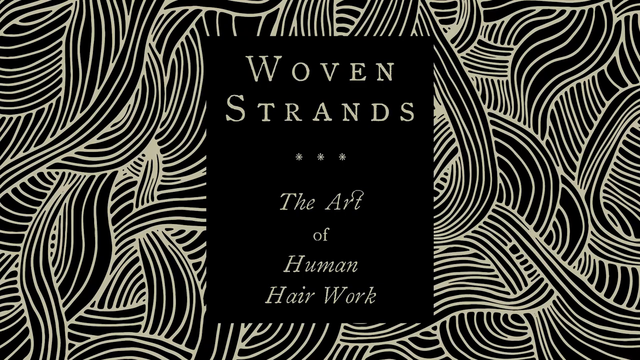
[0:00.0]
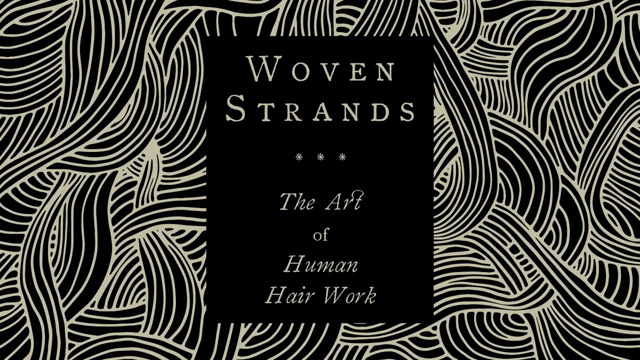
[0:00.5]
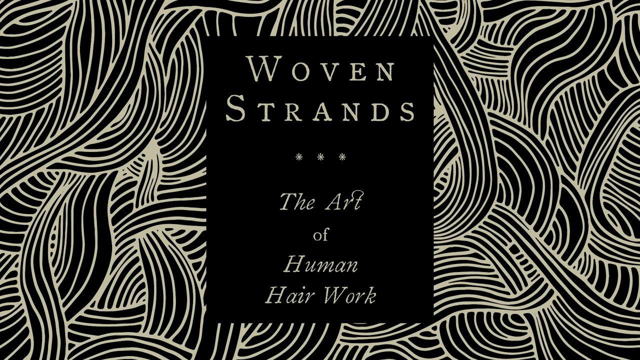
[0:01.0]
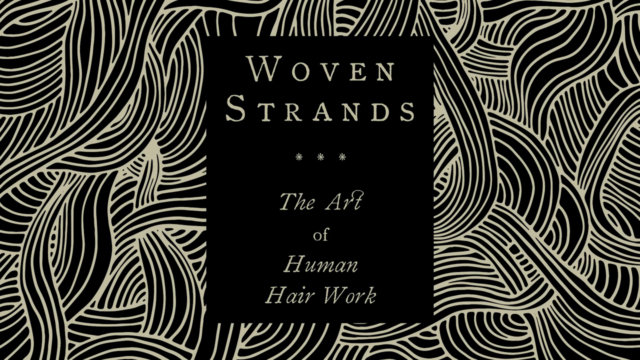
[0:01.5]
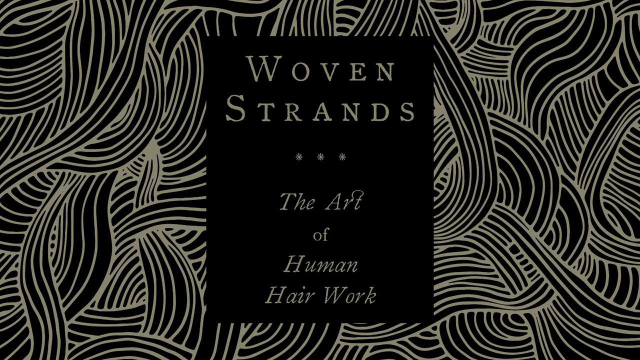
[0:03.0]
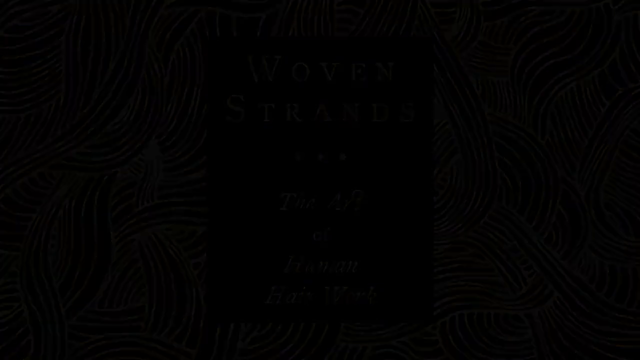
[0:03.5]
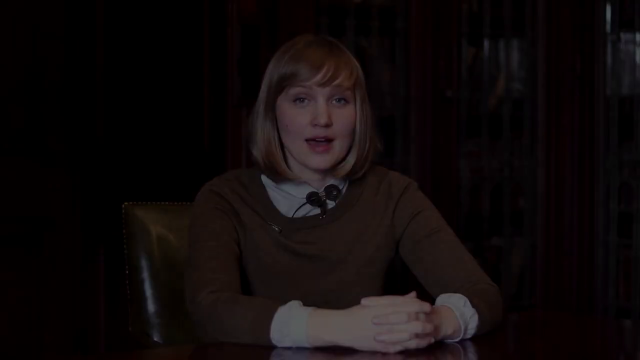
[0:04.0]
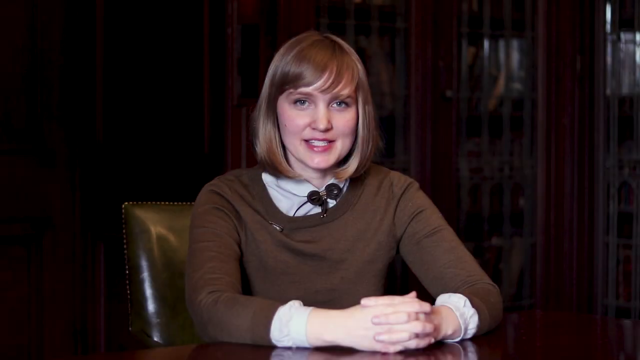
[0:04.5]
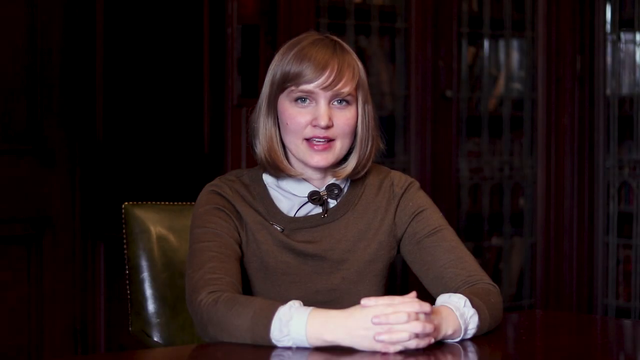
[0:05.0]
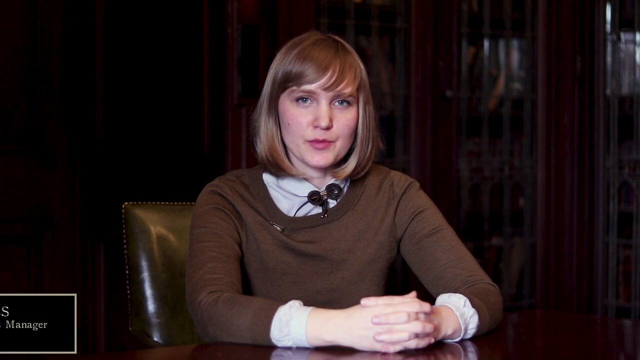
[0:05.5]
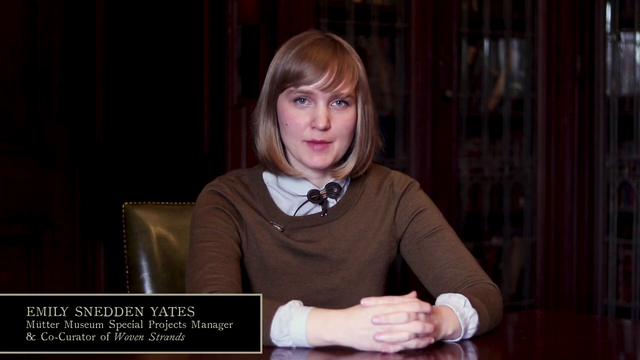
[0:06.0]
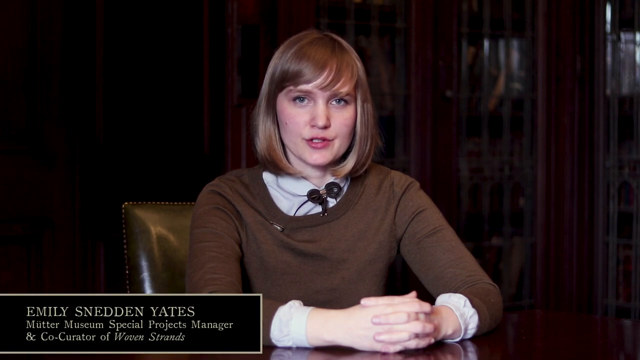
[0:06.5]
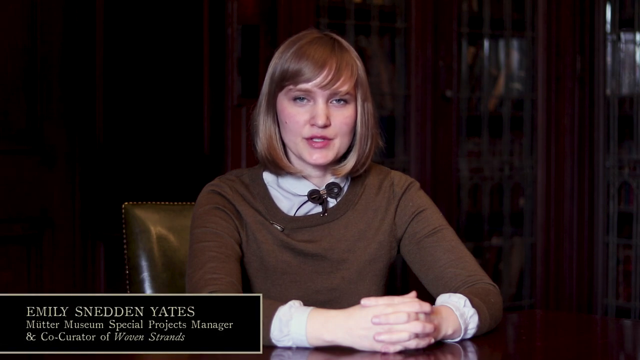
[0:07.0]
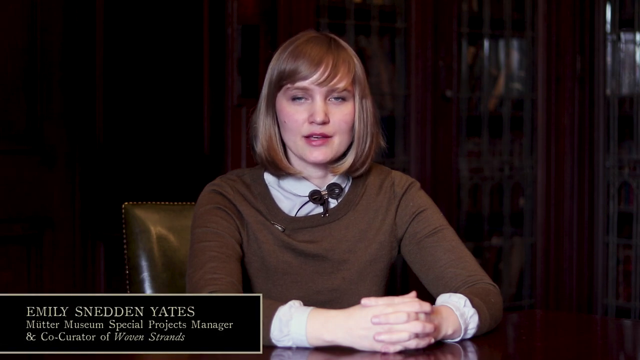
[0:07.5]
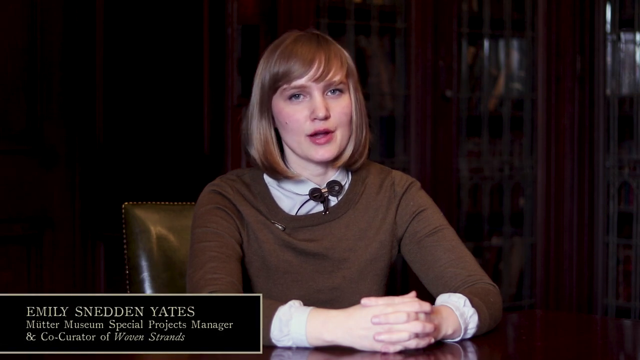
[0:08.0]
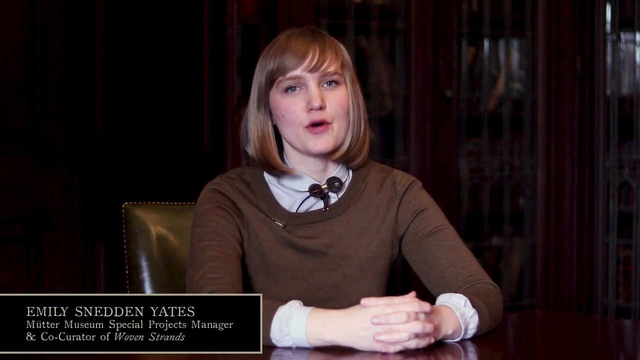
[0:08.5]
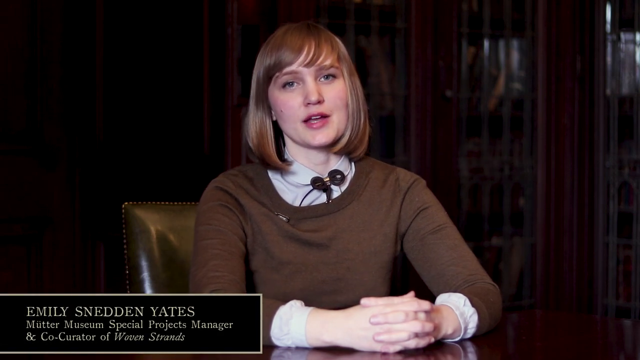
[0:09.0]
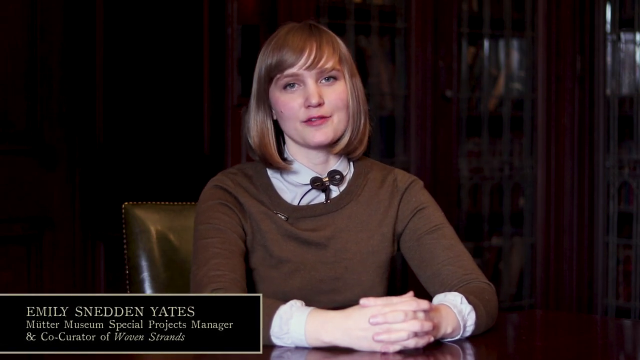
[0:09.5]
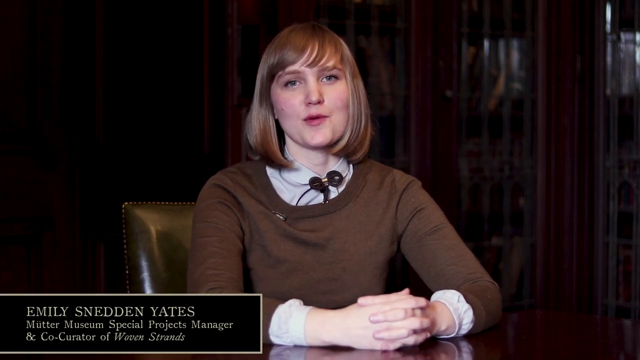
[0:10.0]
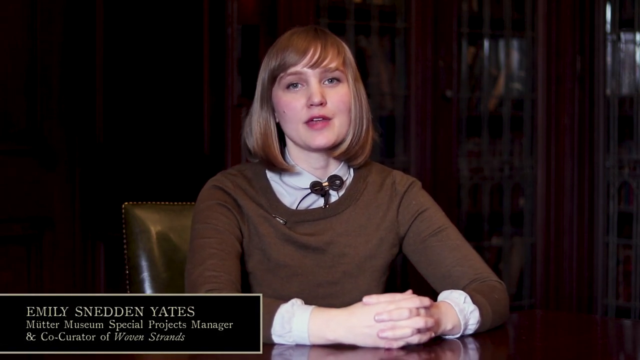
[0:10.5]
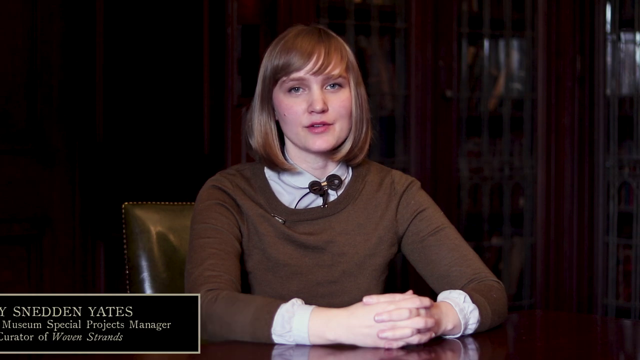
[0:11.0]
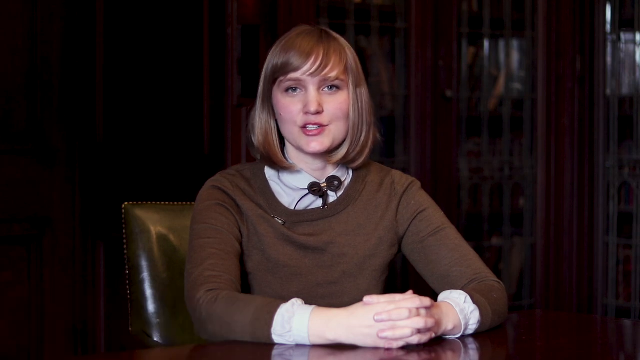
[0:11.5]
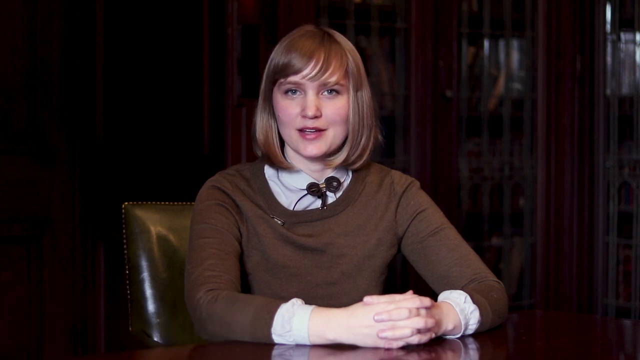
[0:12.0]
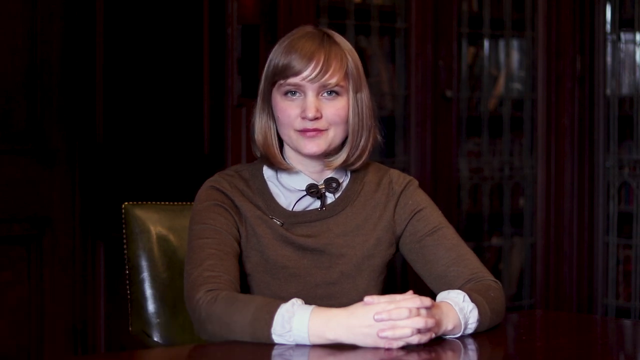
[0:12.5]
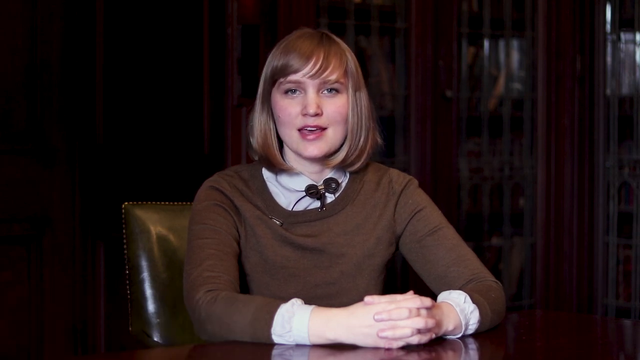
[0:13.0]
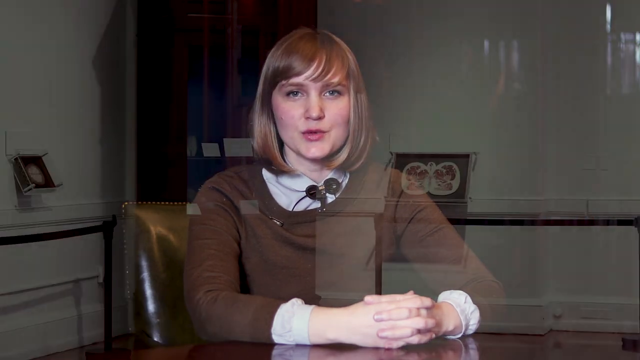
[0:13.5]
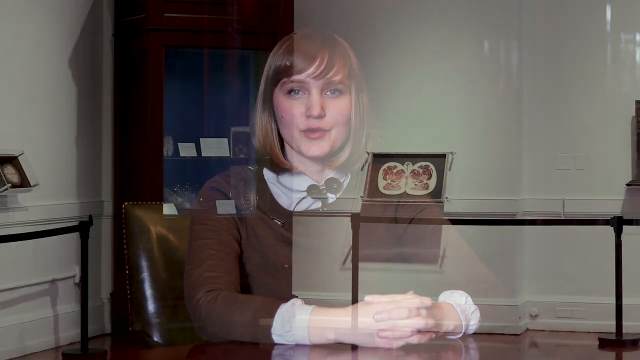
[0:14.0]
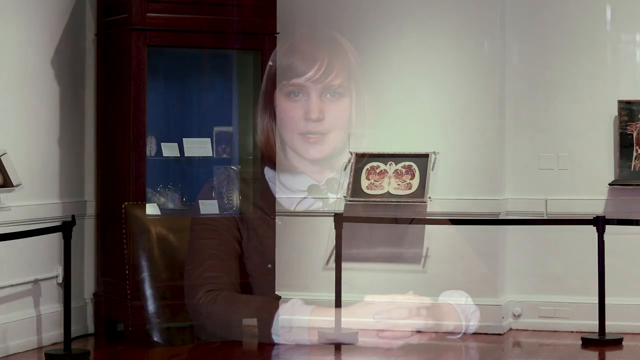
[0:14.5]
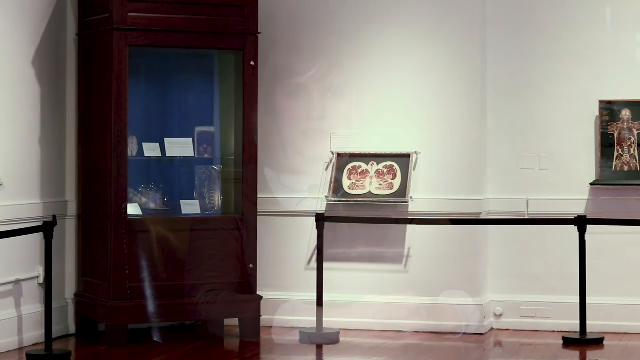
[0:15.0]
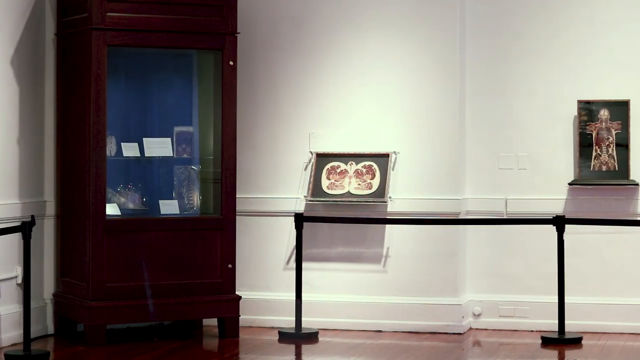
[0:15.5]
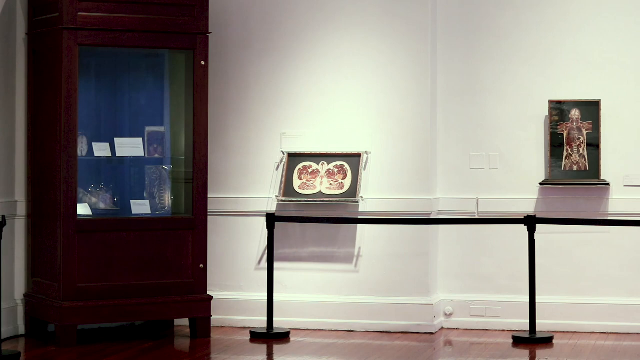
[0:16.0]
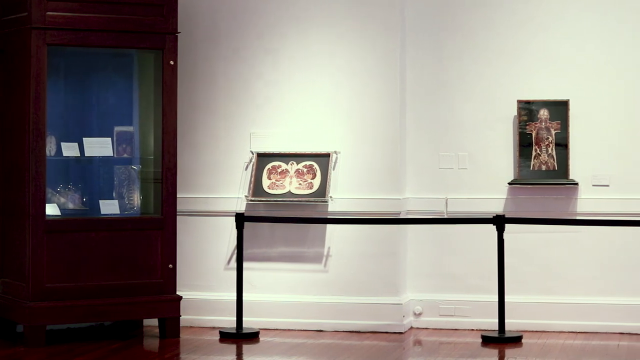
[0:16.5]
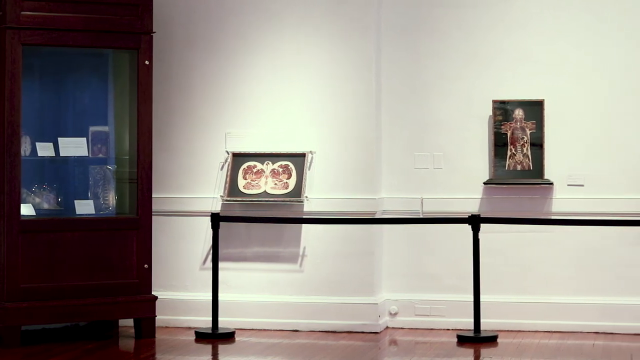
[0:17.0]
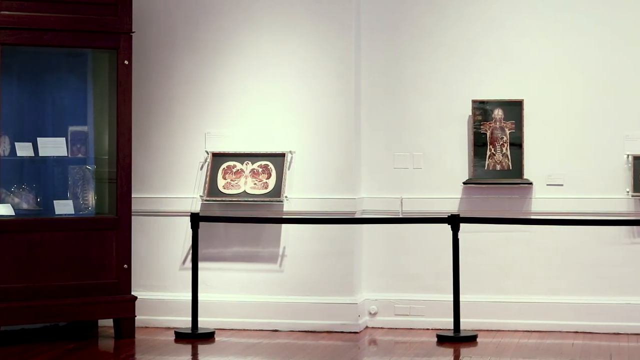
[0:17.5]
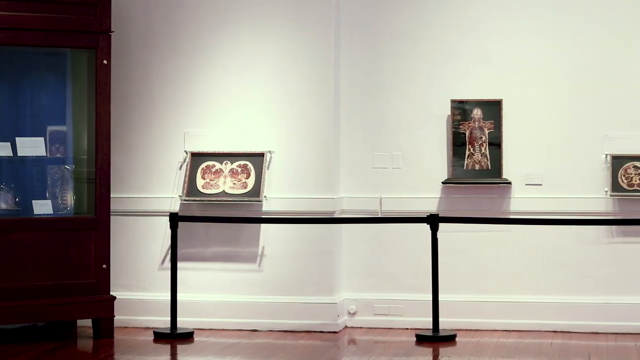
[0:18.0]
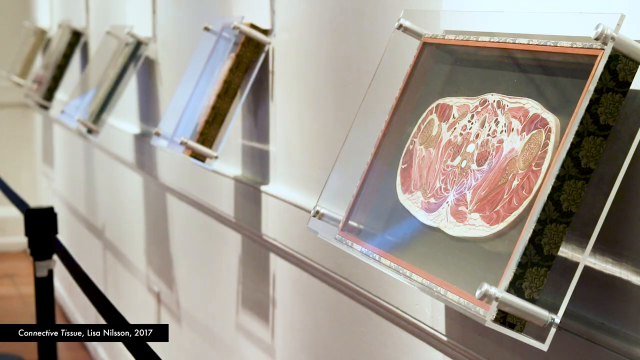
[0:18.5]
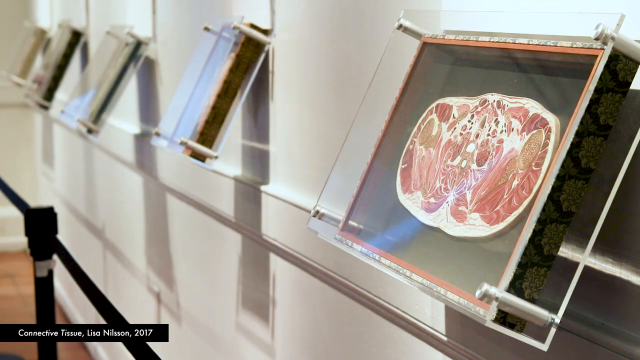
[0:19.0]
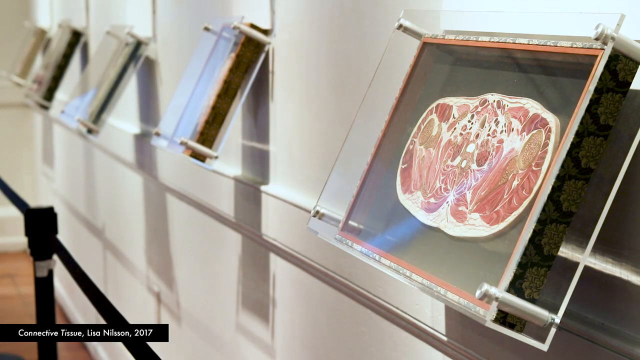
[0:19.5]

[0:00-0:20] Black and white wavy lines form the background, and in the centre of the screen is a black, portrait-shaped rectangle. At the top it reads "woven strands" in capital letters, with three asterisks centred below, and beneath this "the art of human hair work". In "art", a loop connects the R and the T. This text then disappears, and a woman appears with hair in a bob with a sweeping fringe, in a kind of brownish-blonde colour. She wears a white shirt with some kind of microphone clipped to it and a brown jumper over the top; only the cuffs of the white shirt poke out from the bottom of the jumper's sleeves. She is sitting on a green leather chair with studs around the outside and speaks to the camera. She is identified as Emily Sneddon Yates, with information about the job she does in a box at the bottom left. Images of museum exhibitions follow, shown behind a black strap that keeps people away from the works.